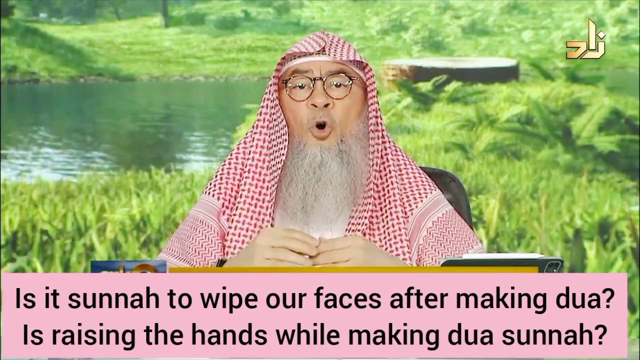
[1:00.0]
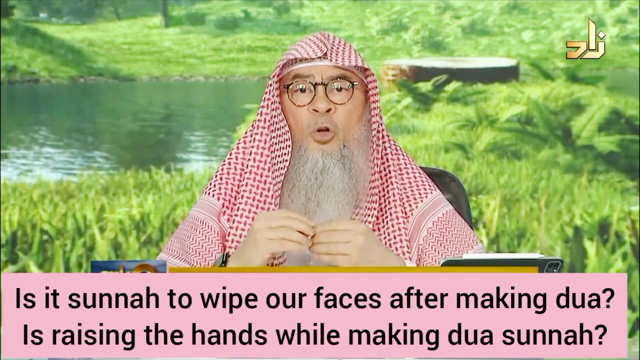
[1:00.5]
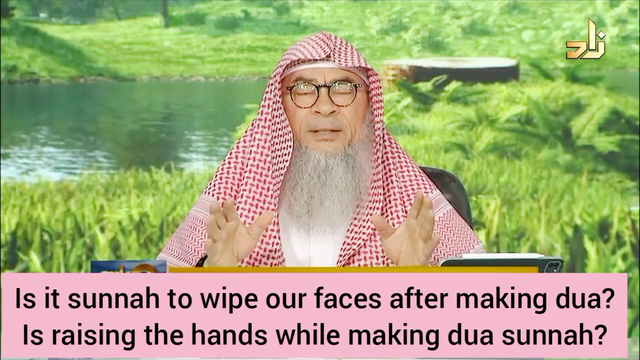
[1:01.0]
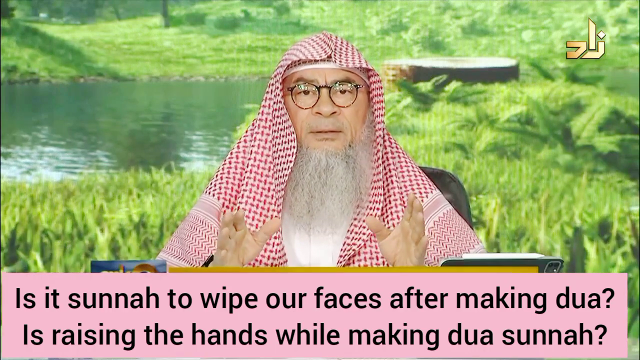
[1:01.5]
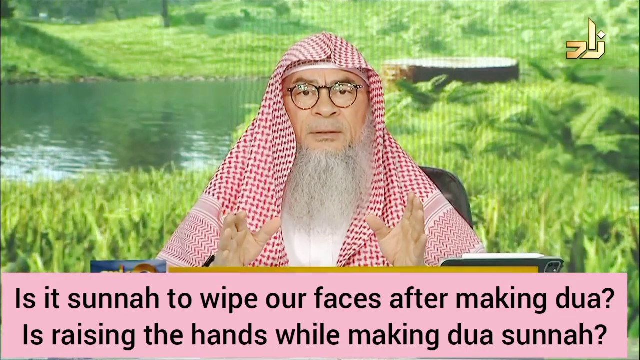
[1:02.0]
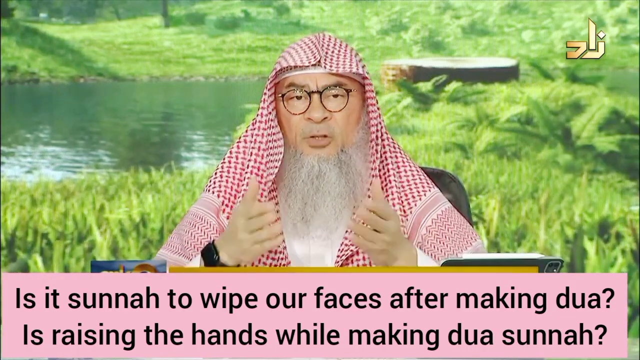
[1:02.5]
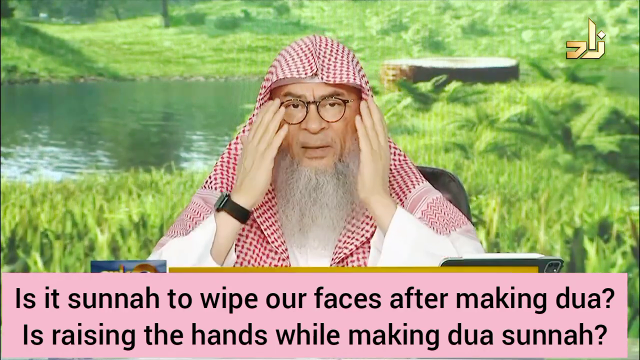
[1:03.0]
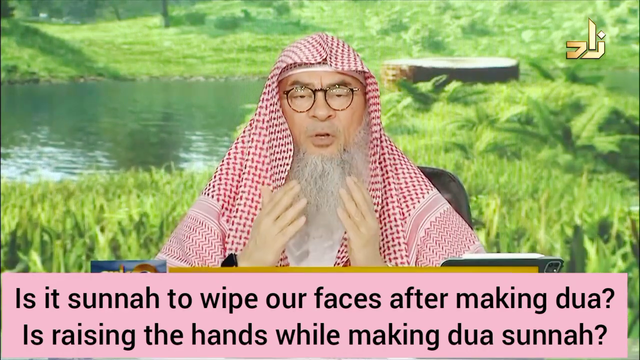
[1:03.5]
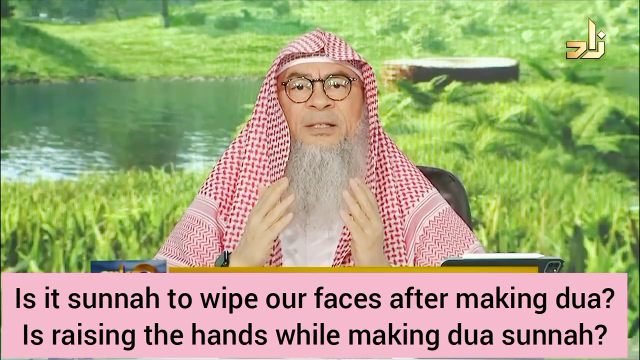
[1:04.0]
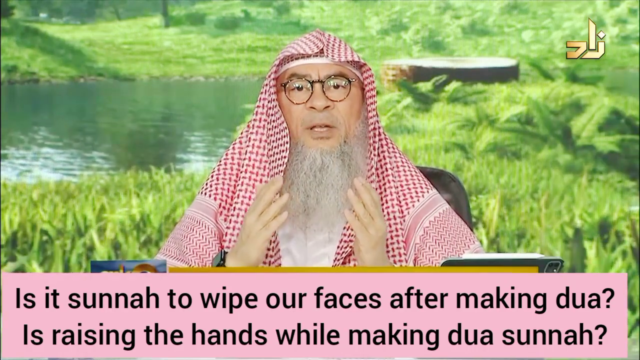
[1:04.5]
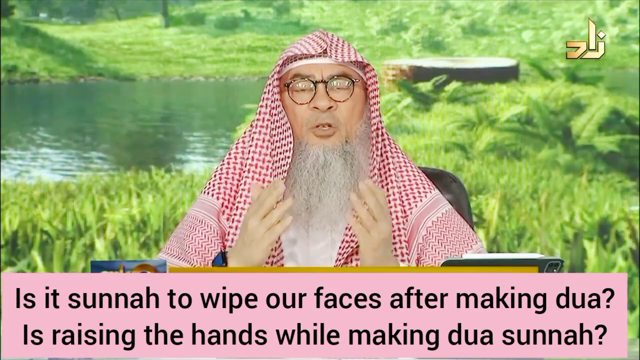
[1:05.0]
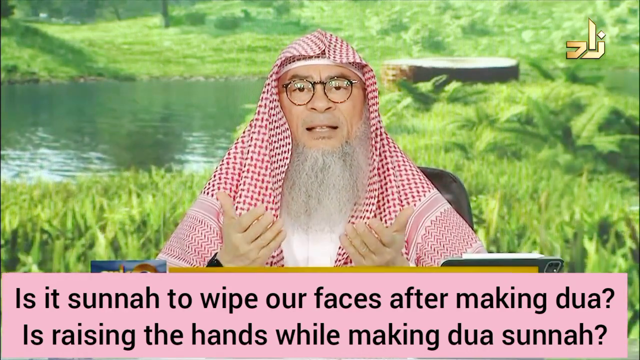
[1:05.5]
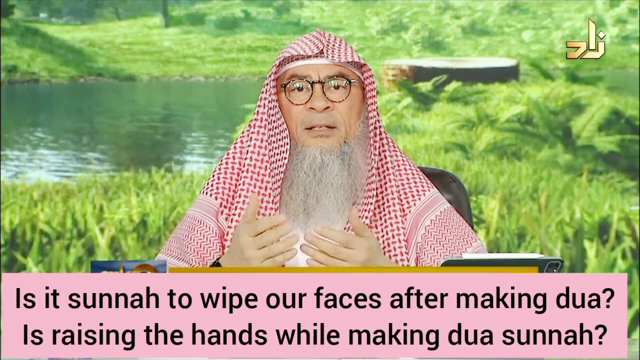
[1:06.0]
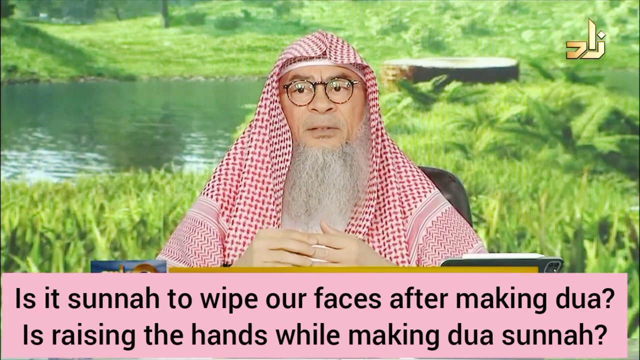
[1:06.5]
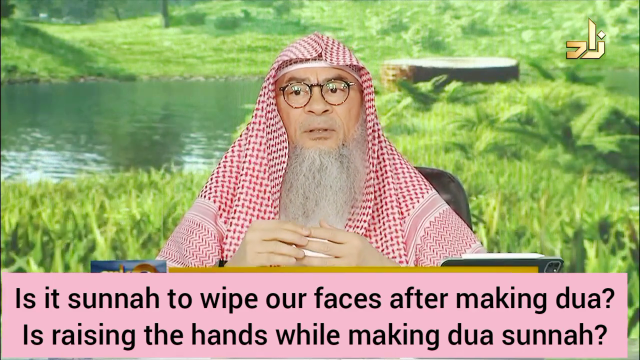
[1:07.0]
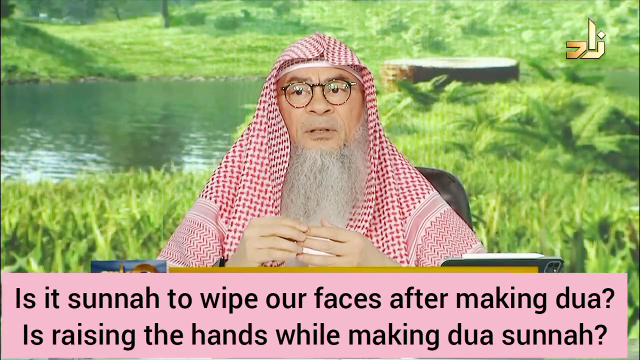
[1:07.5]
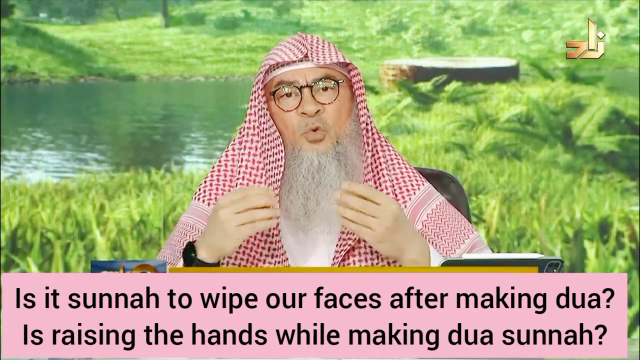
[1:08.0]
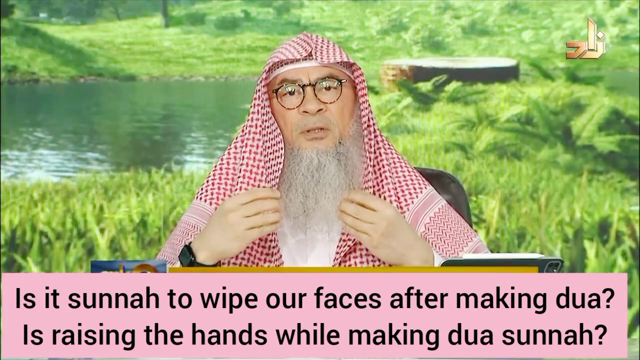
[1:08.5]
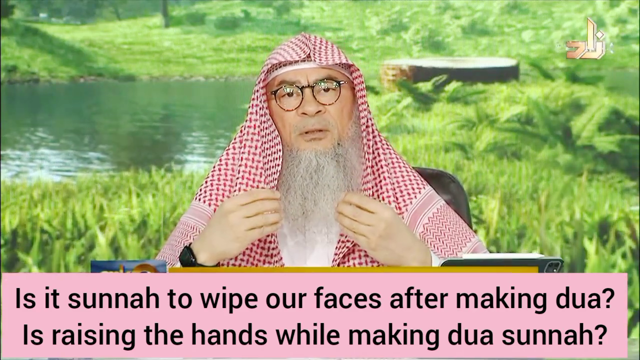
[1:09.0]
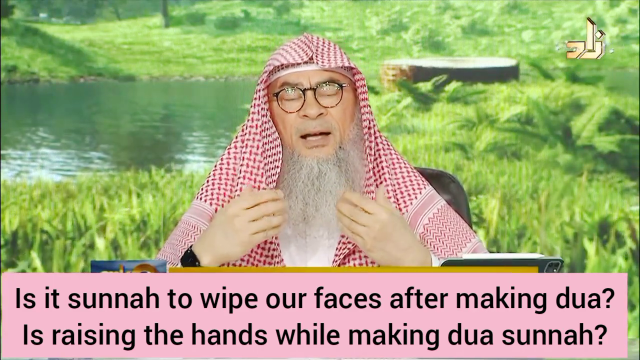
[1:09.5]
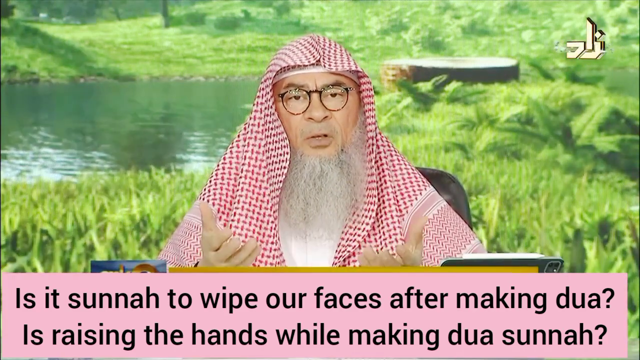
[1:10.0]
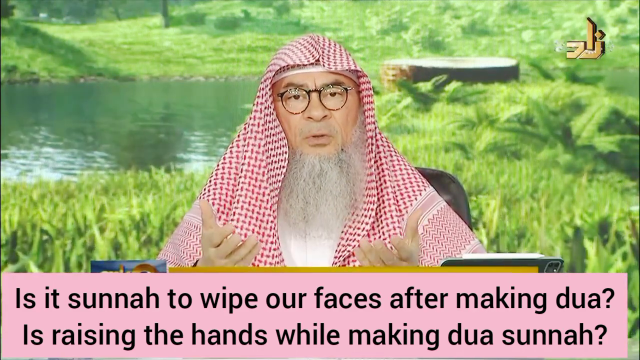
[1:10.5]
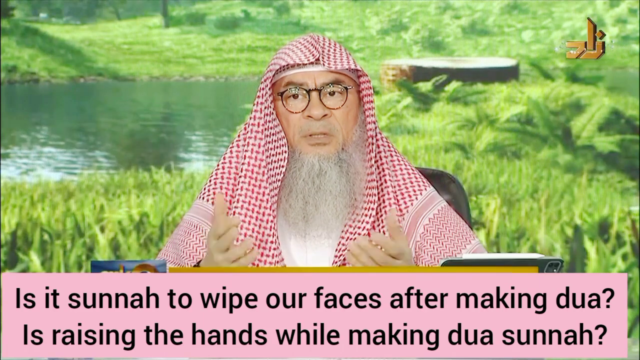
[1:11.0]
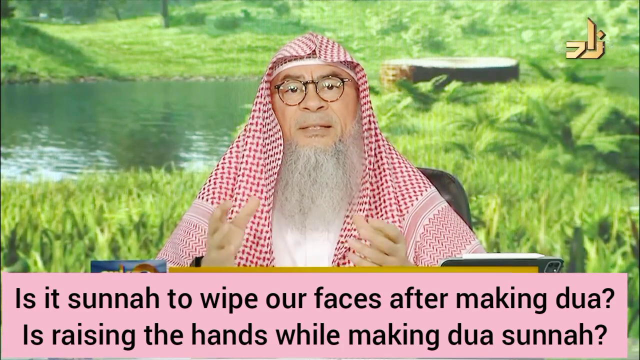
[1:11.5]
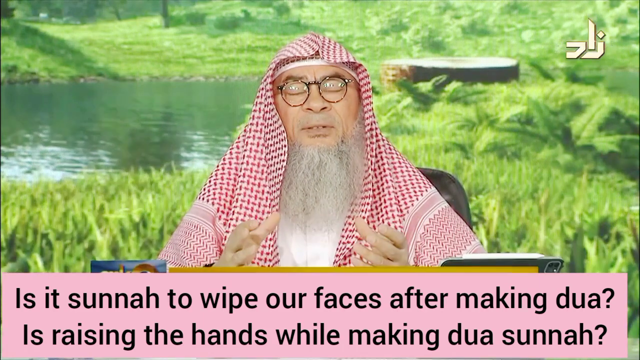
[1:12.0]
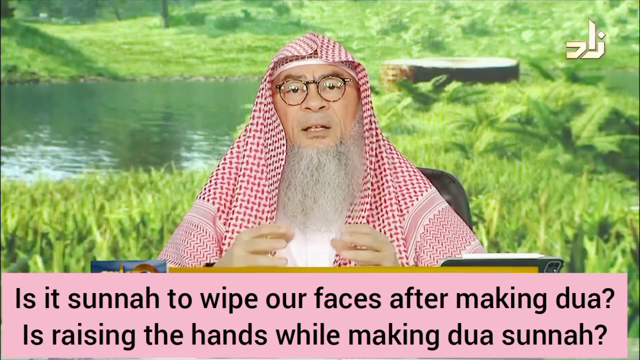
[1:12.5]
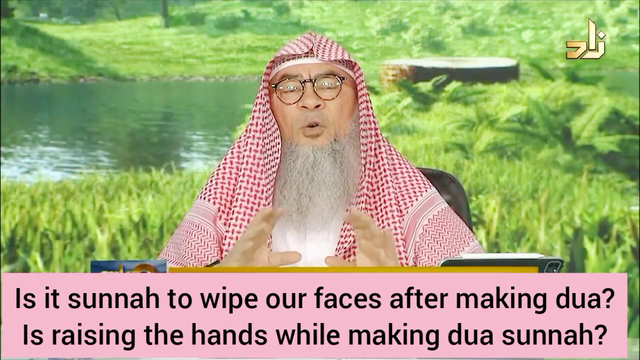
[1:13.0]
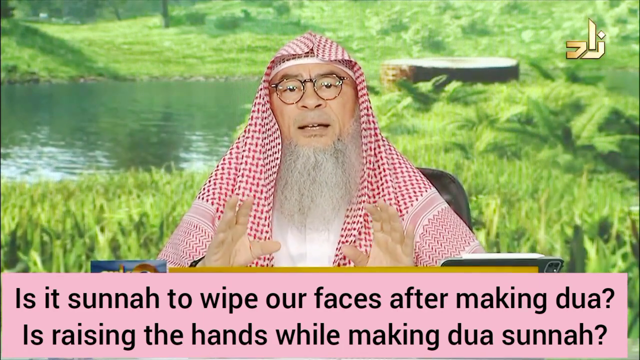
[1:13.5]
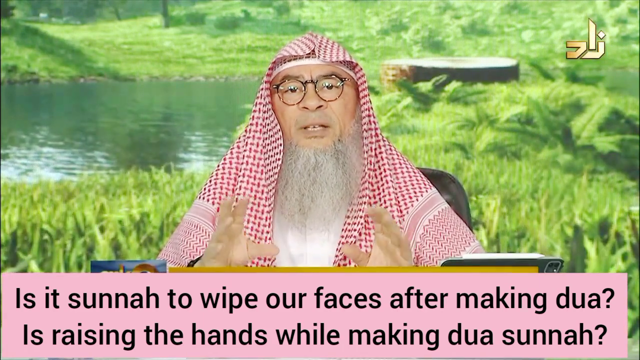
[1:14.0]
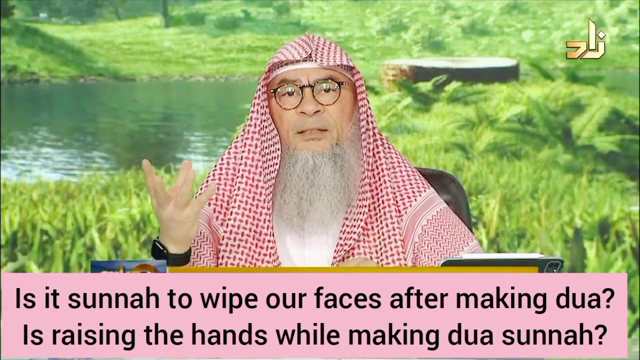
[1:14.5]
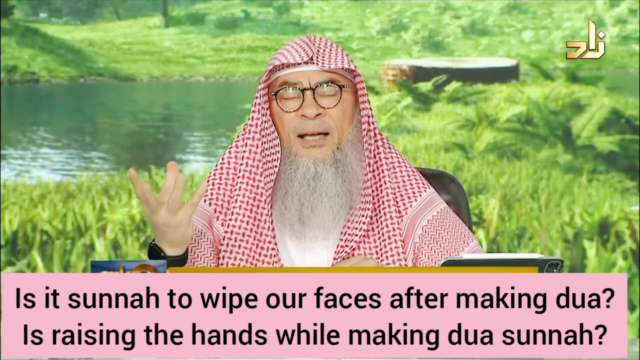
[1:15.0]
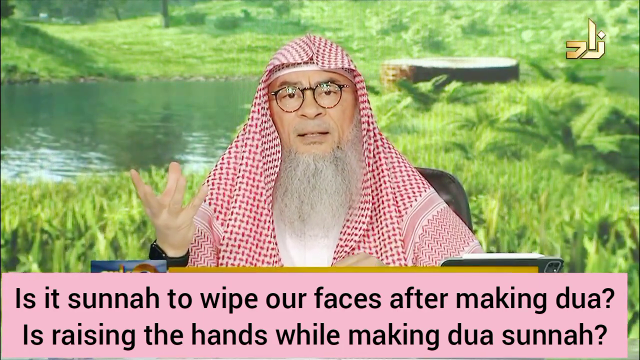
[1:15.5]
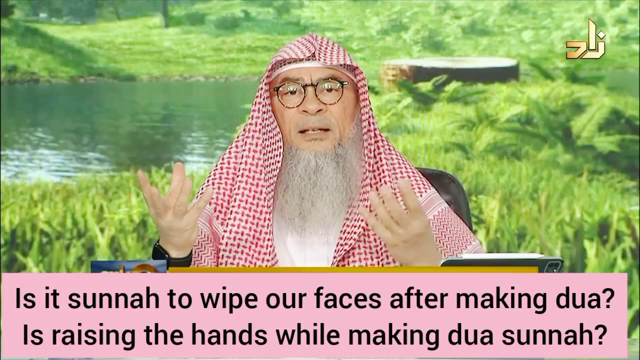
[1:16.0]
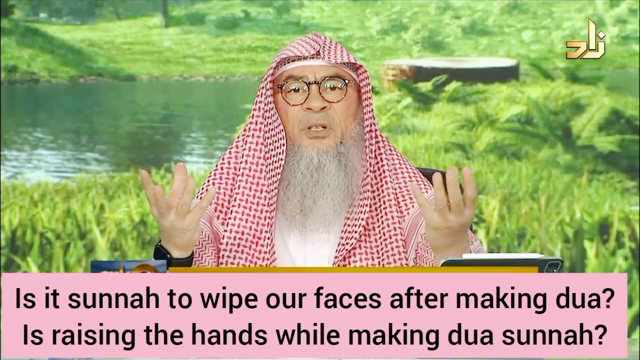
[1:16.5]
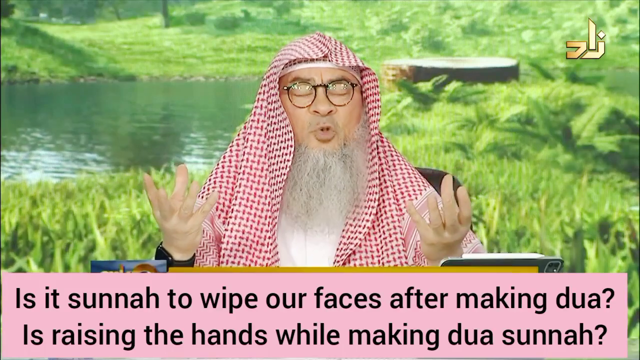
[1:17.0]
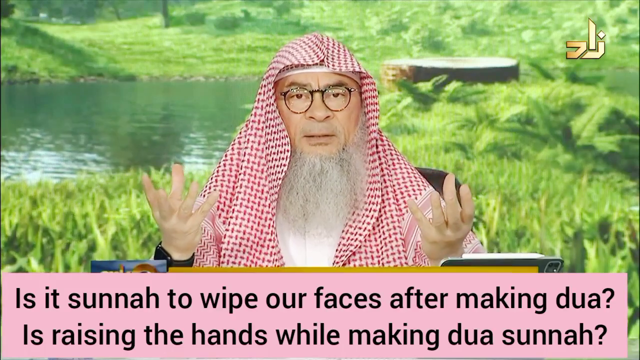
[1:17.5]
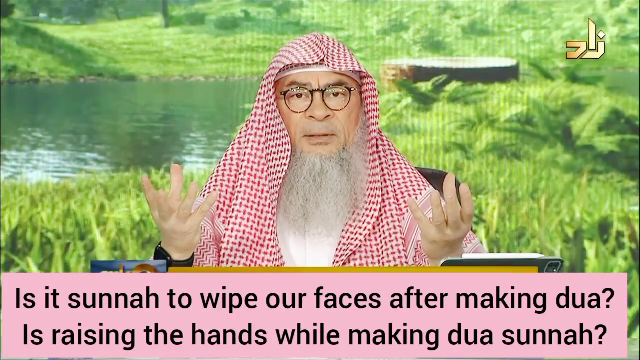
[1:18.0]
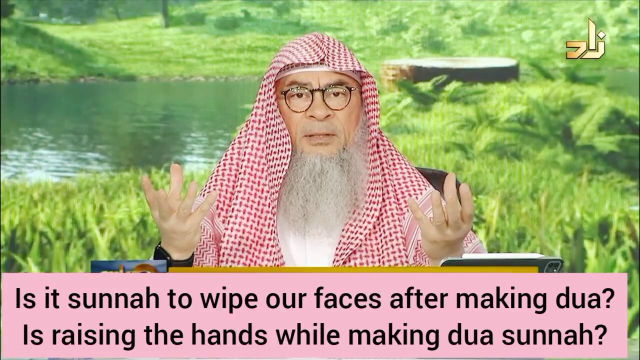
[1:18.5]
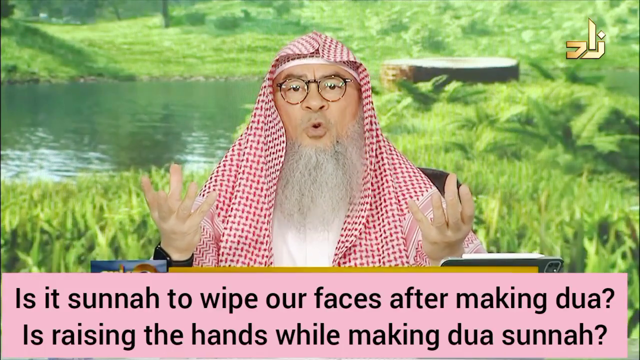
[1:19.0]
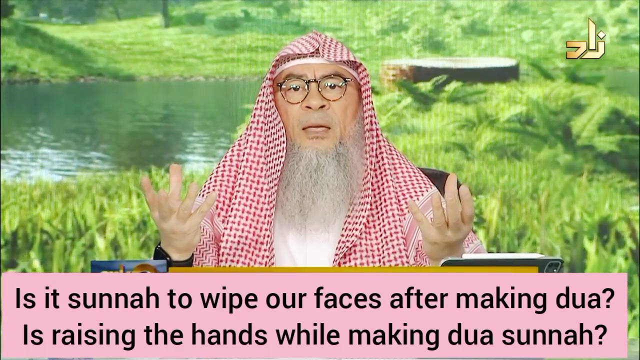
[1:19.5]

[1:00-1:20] The same gentleman is shown in the same close-up in front of the same background, apparently still talking and gesturing a lot with his hands. He kind of raises his hands and makes a face-wiping motion, matching the text that reads "is it sunnah to wipe our faces after making dua, is raising the hands while making dua, sunnah." The close-up is chest up, showing him from about his pecs up to his head.